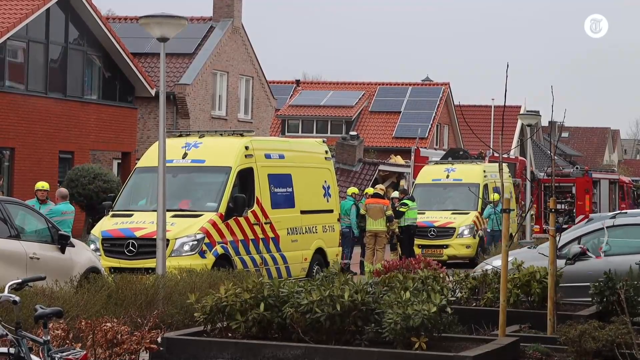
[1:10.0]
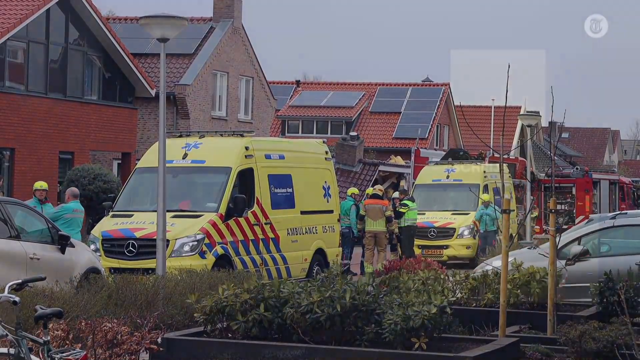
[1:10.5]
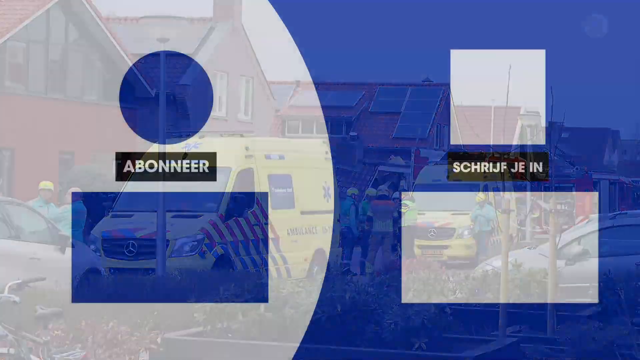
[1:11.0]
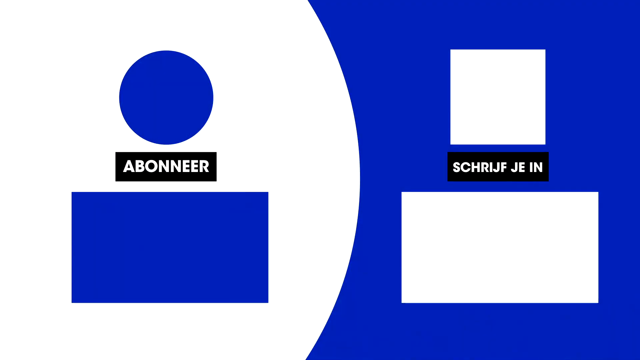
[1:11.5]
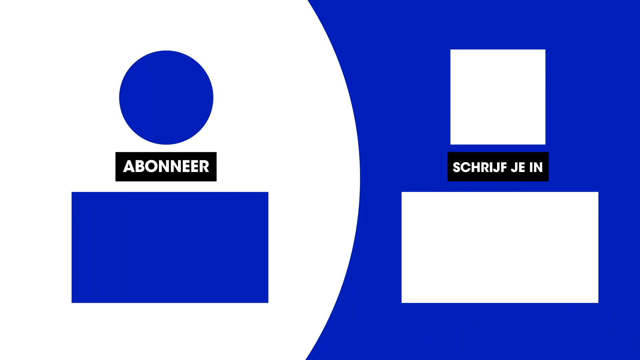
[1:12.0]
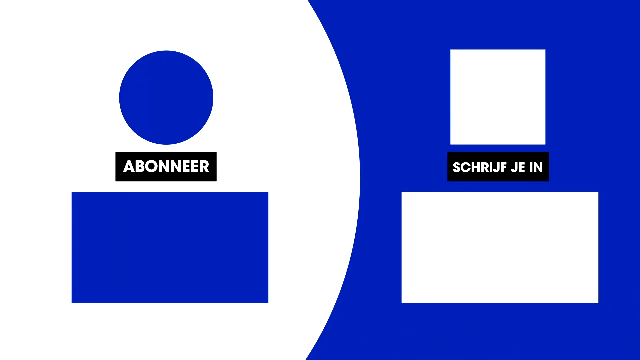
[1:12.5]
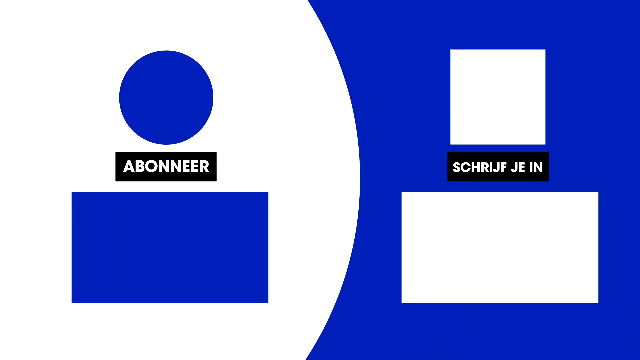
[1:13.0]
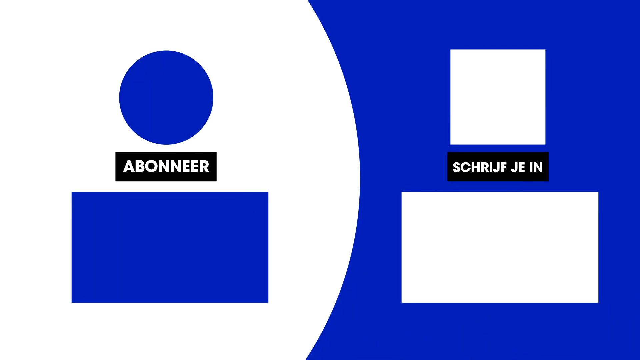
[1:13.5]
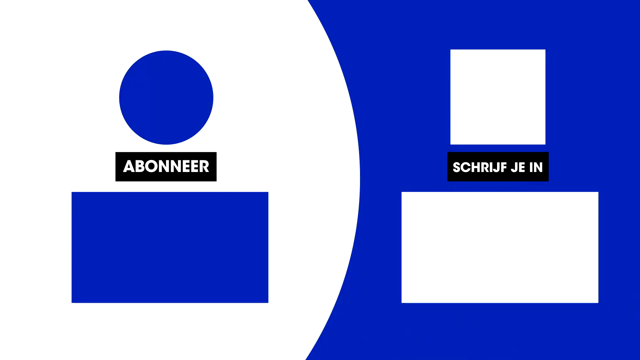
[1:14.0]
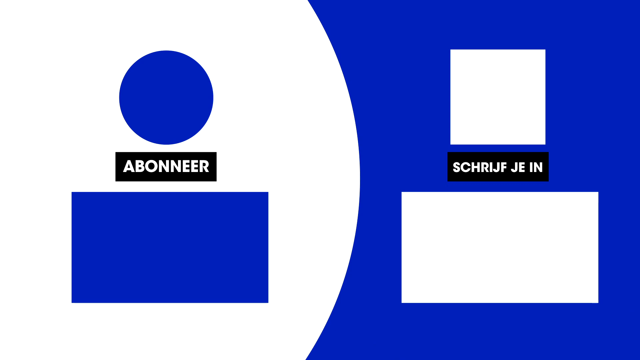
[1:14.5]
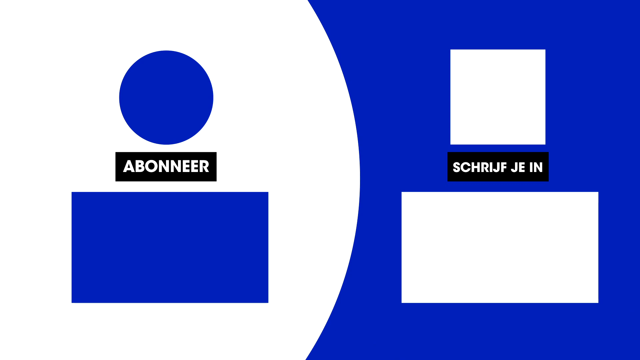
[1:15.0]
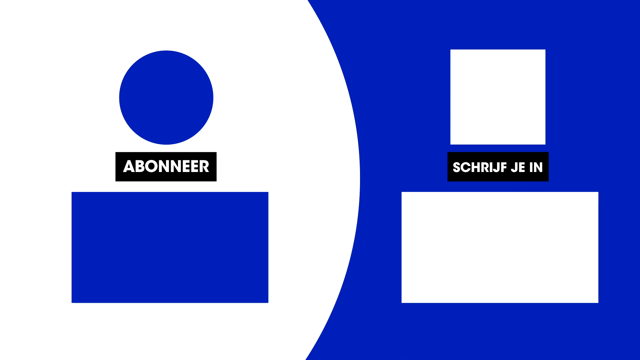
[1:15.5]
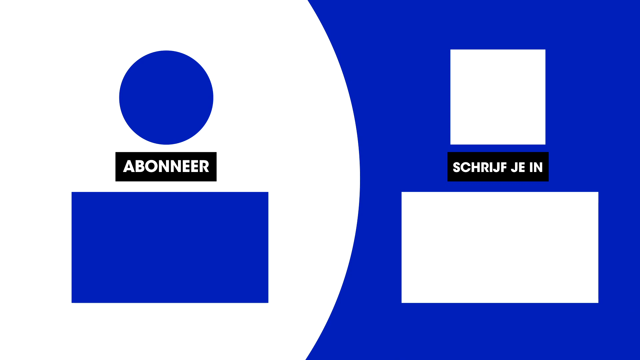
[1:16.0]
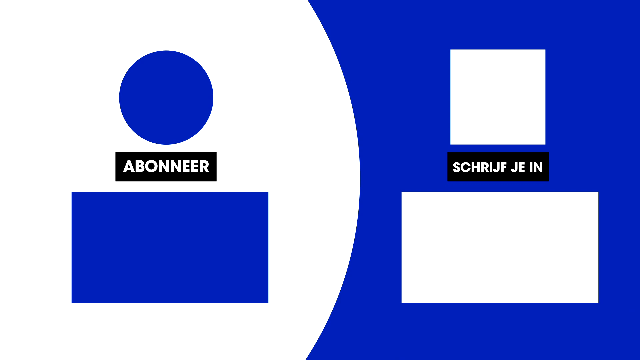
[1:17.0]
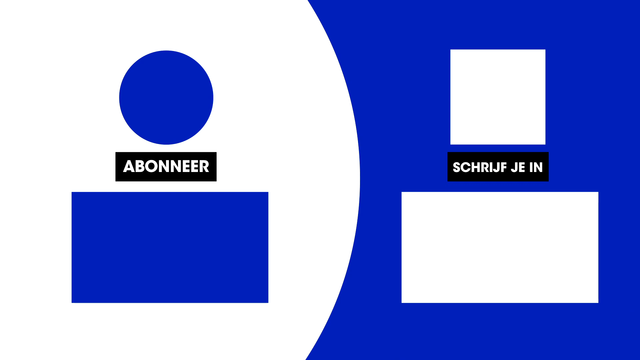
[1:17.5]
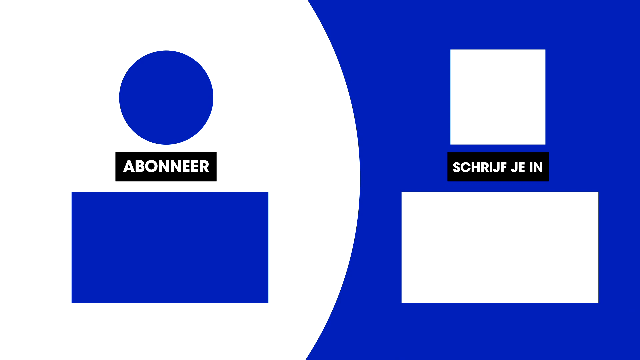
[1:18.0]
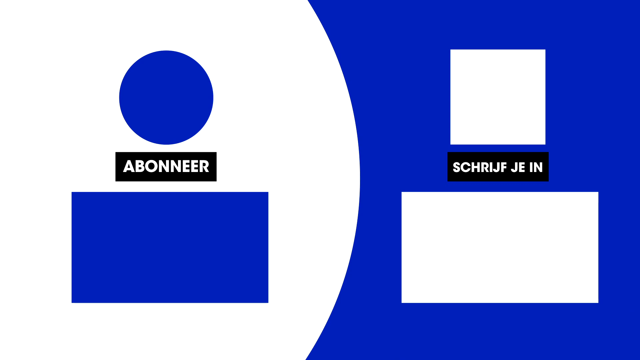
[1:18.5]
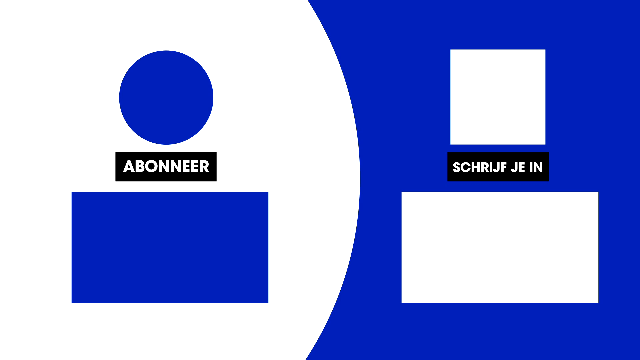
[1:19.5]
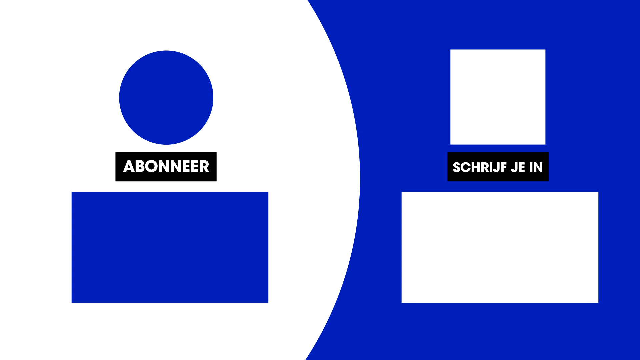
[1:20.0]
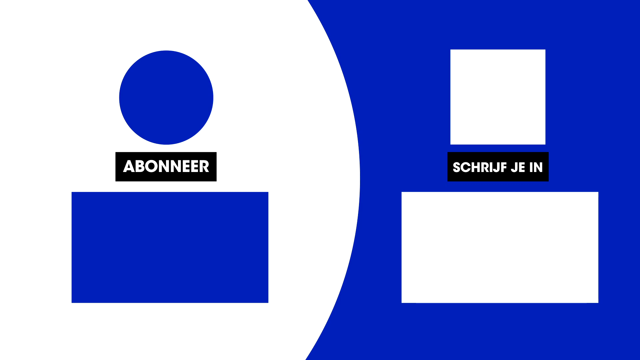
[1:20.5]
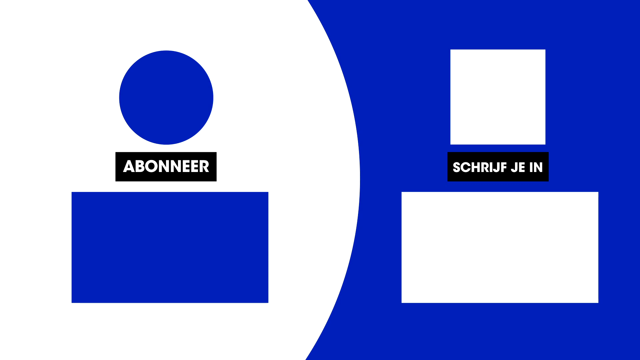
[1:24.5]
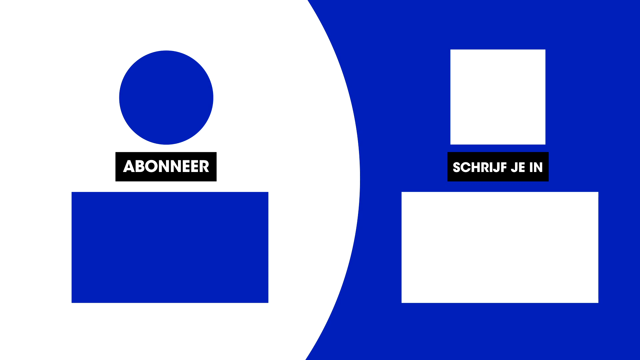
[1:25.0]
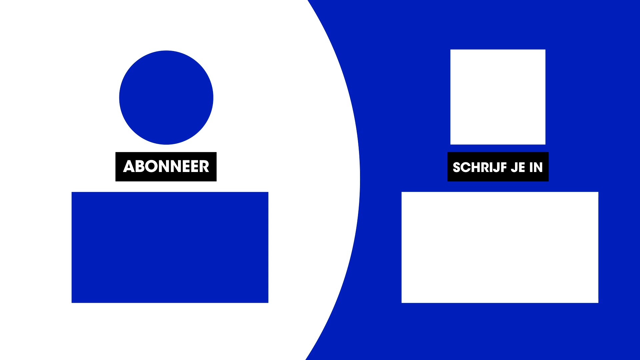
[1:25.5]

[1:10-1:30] A brief shot of the news story shows a local street lined with brick houses, where one house is almost completely demolished. The street is lined with a few ambulances, fire trucks and police cars, and firemen, ambulance workers and policemen are on the scene. A small huddle of firemen, ambulance workers and policemen stands between the ambulances having a discussion, maybe about how to go about working on the house, possibly to rescue people or secure the area. The scene then changes to what seems to be an exit card of some sort, with a white side on the left and a blue side on the right. On the left there is a blue circle with a blue rectangle underneath and the word "Aboneer"; on the right there is a white square with a white rectangle underneath that says "Schrijf Je In".